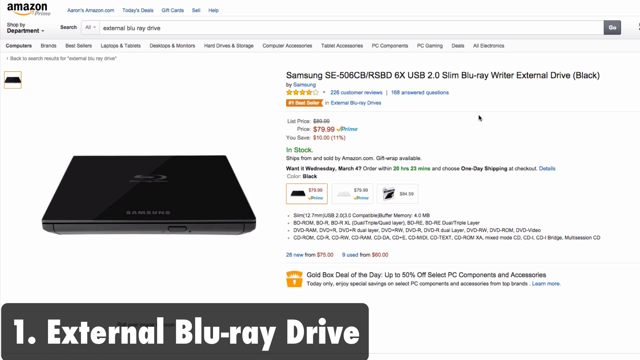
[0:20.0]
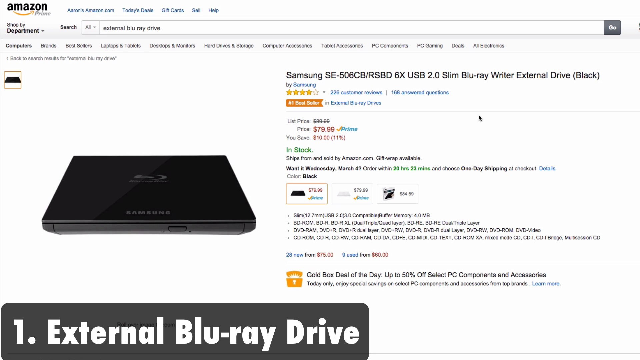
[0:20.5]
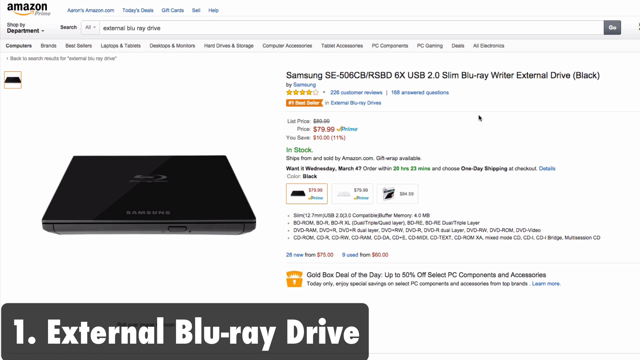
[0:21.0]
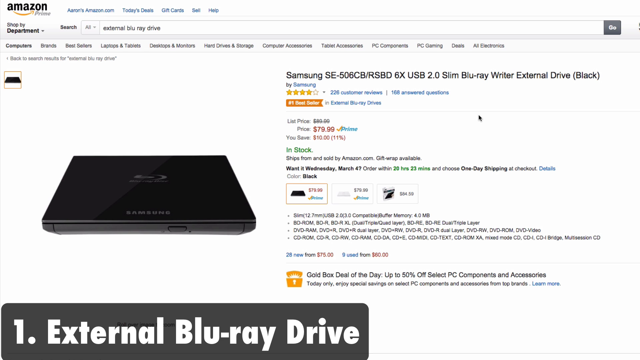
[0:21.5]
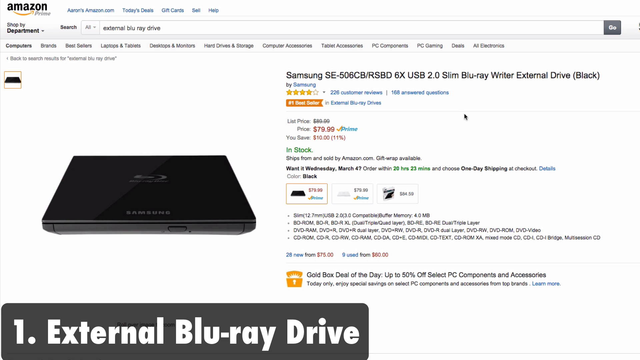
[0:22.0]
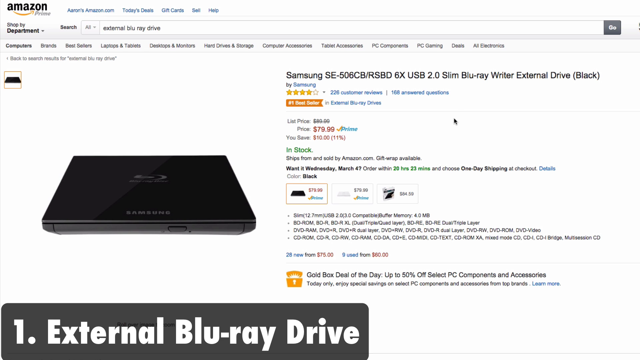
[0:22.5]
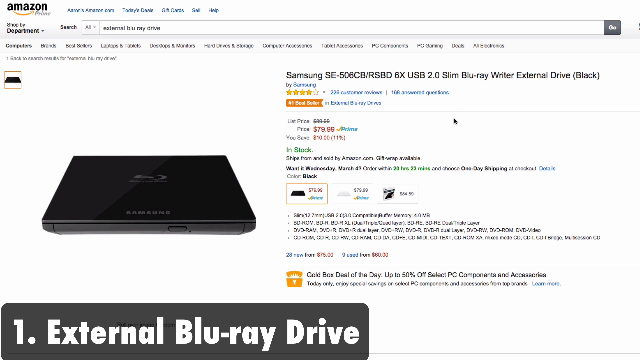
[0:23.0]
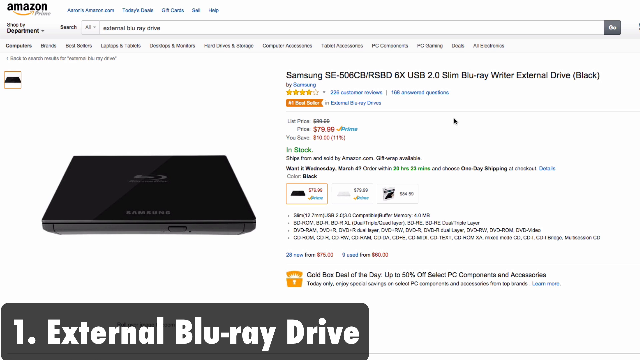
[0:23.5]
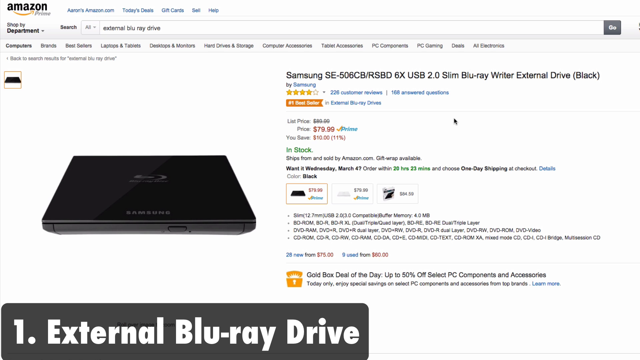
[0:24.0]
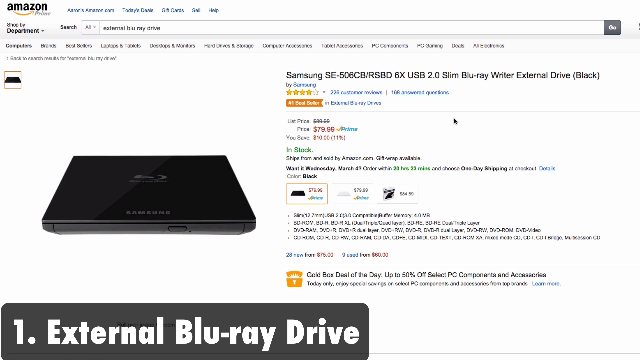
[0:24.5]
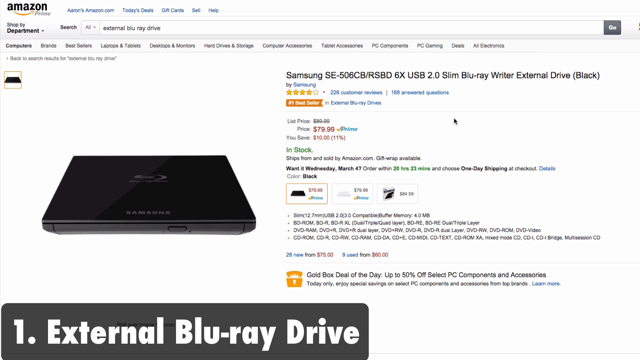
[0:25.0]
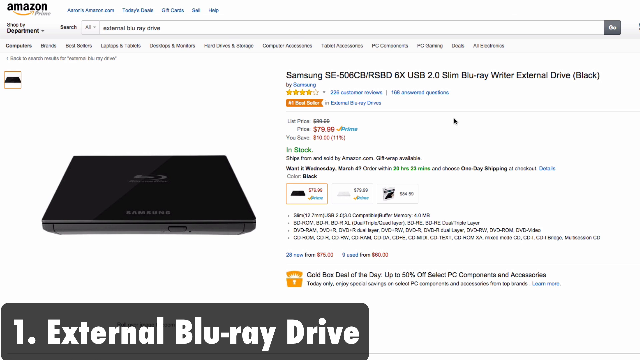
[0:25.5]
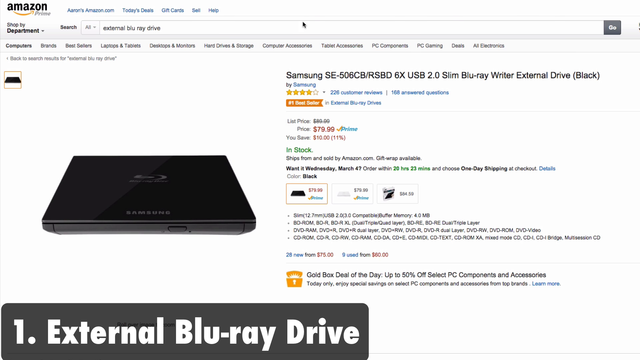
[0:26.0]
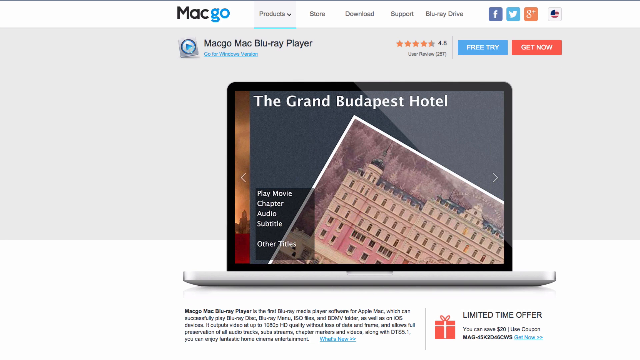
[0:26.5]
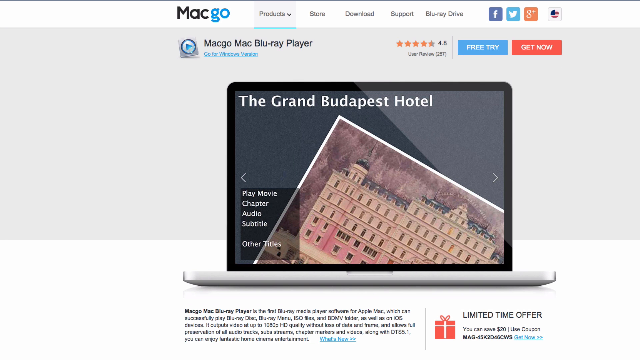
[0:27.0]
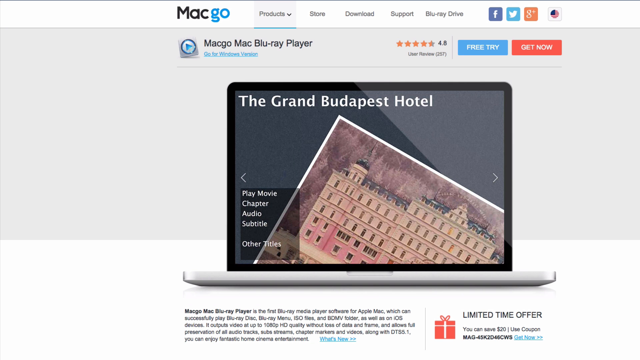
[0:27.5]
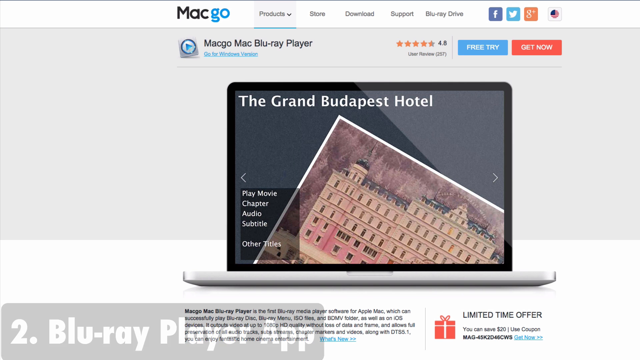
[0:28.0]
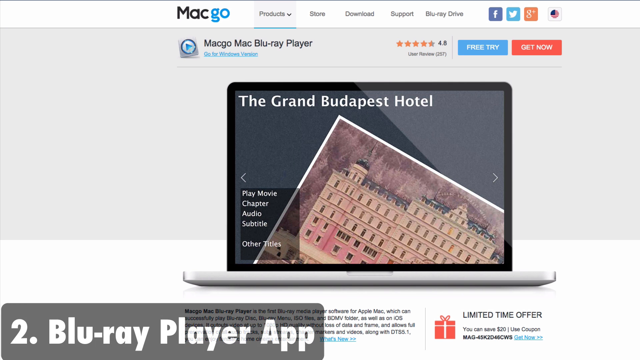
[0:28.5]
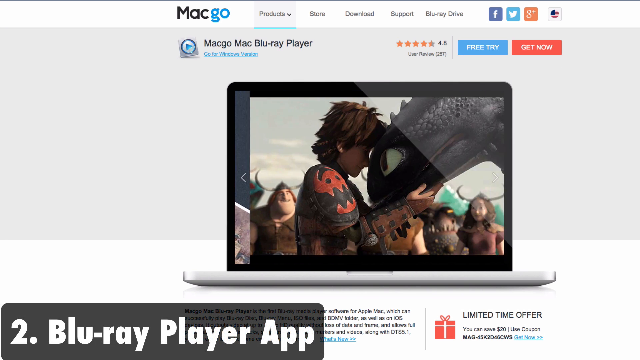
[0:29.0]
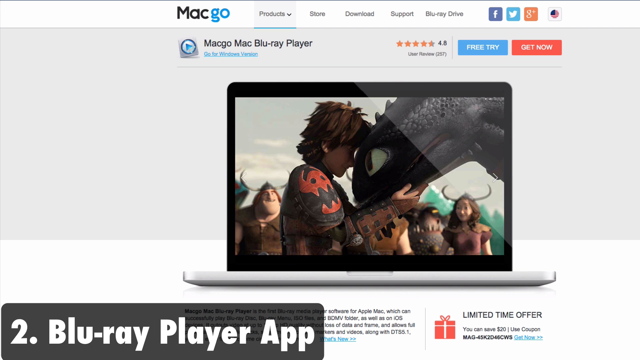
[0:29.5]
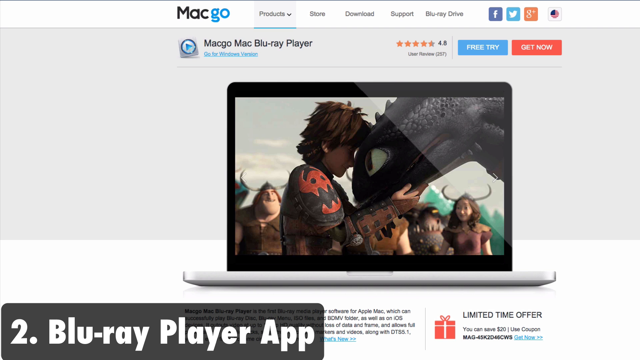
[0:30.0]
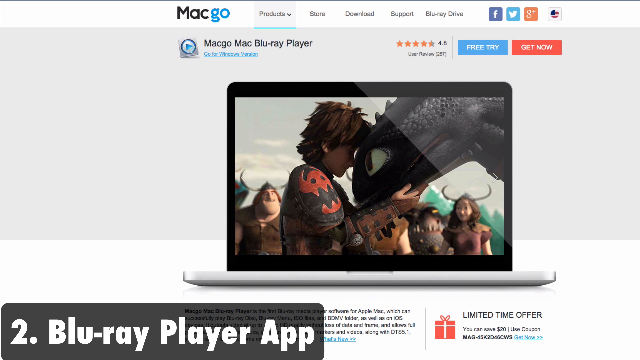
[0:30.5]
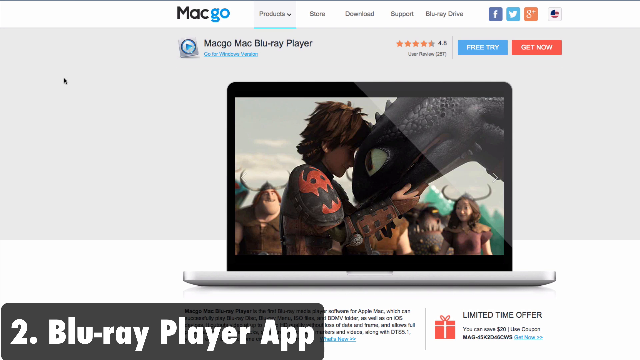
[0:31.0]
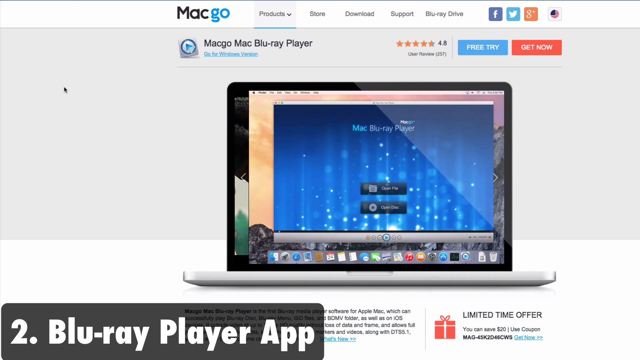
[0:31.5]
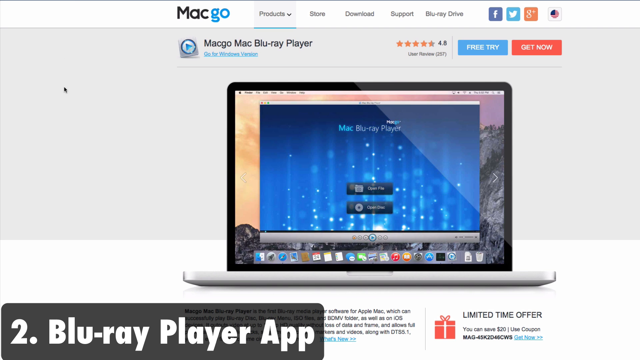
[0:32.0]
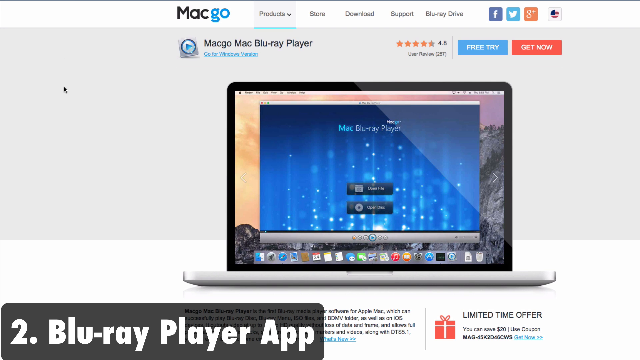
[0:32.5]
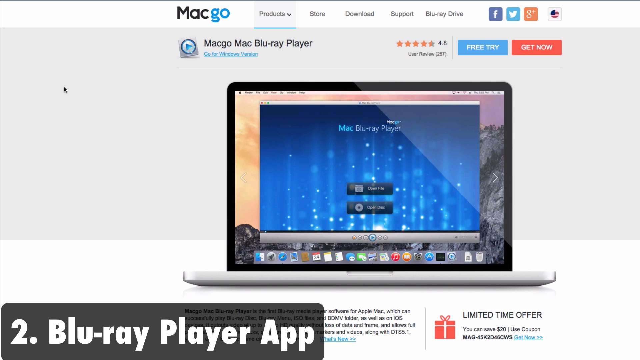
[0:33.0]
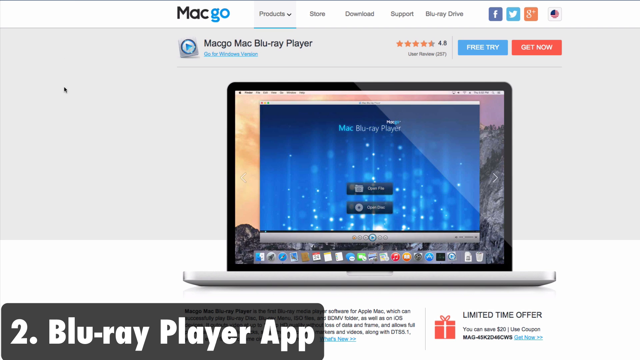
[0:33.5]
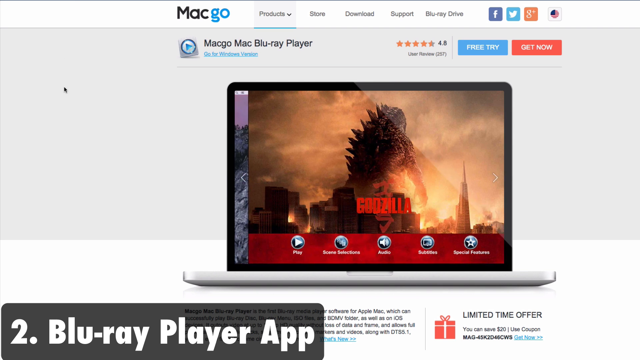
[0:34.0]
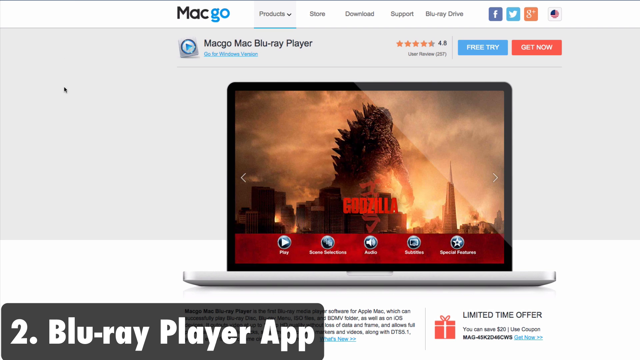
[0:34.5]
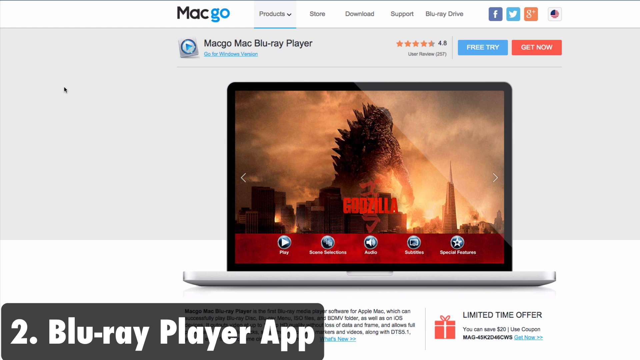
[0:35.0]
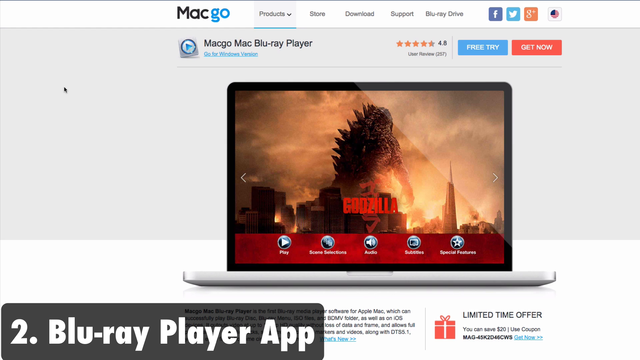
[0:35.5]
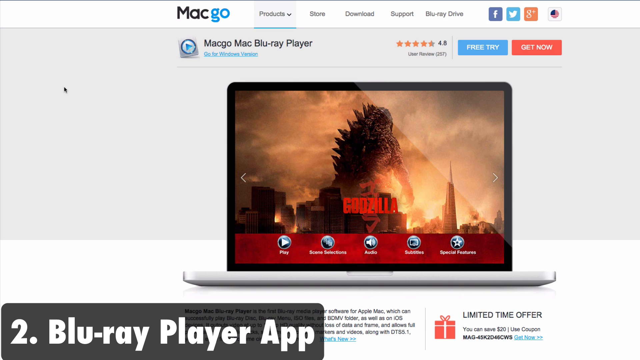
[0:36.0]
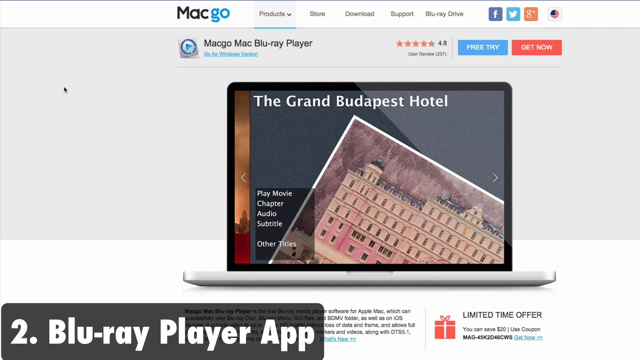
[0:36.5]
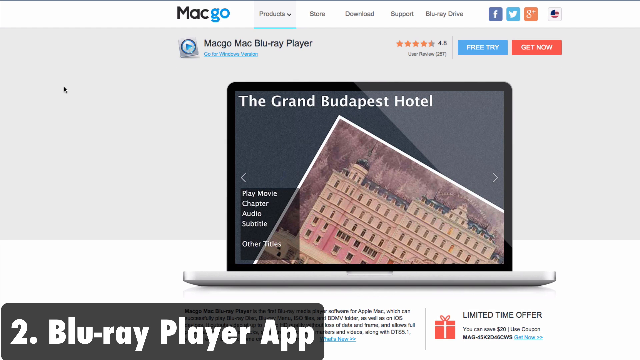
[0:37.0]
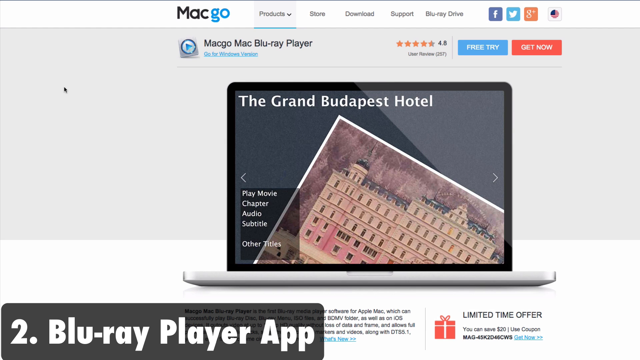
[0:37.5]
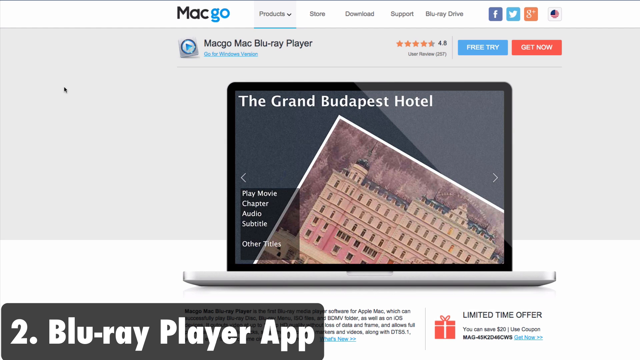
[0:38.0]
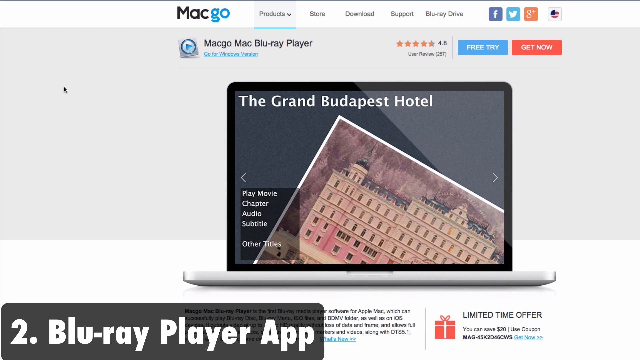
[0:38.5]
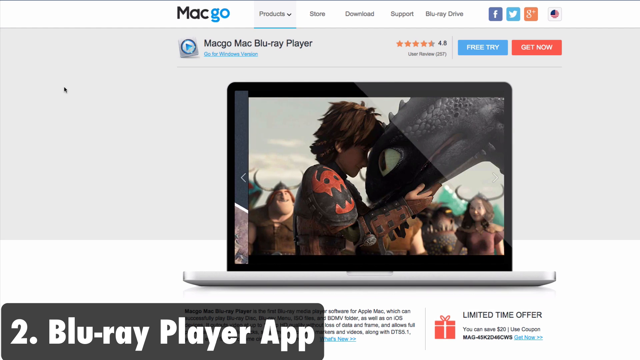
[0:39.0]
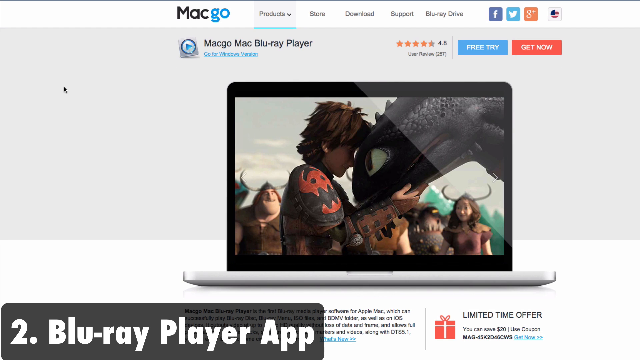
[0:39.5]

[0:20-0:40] The same Amazon screen is shown as the mouse moves around and then kind of stops. Next, a website appears that seems to be called Mac Go, showing "Mac Go, Mac Blu-ray player." Across the top of the screen are "Products, Store, Download, Support" and "Blu-ray Drive," followed by symbols for Facebook, Twitter and Google+. A rating of 4.8 stars is shown. Something that looks like a tablet displays "the Grand Budapest Hotel," and different movies and other things appear on its screen.